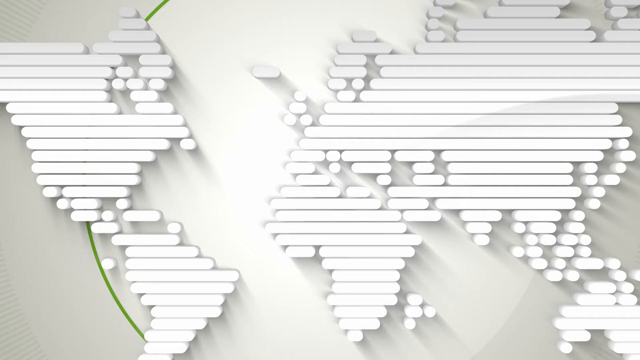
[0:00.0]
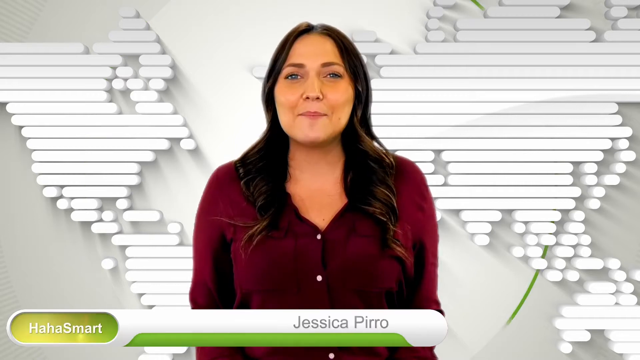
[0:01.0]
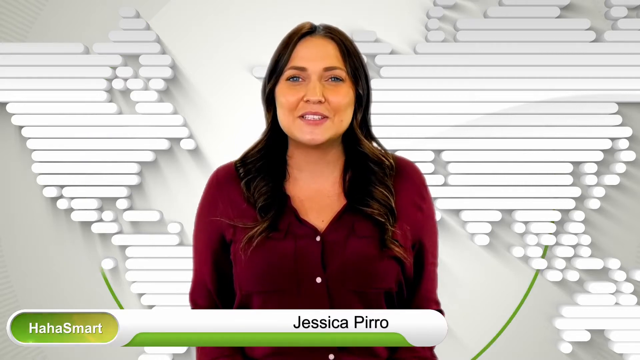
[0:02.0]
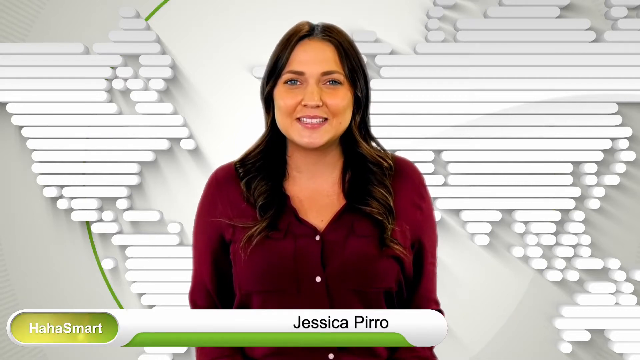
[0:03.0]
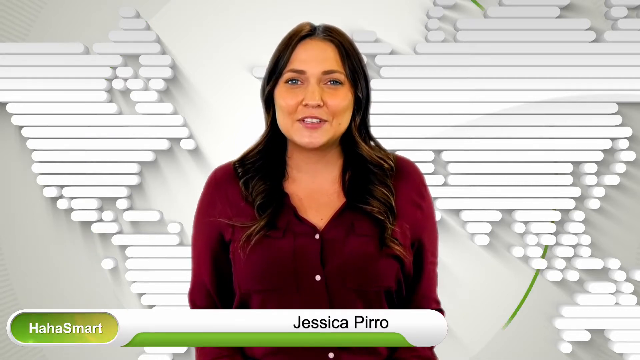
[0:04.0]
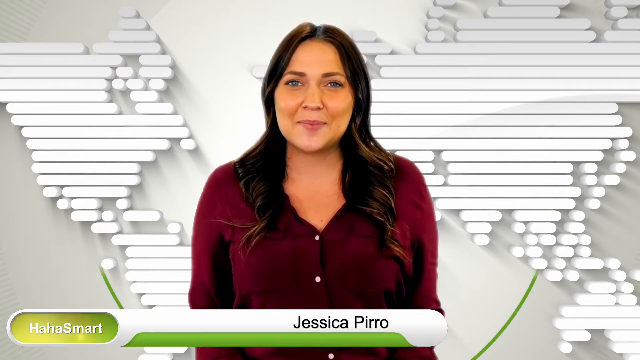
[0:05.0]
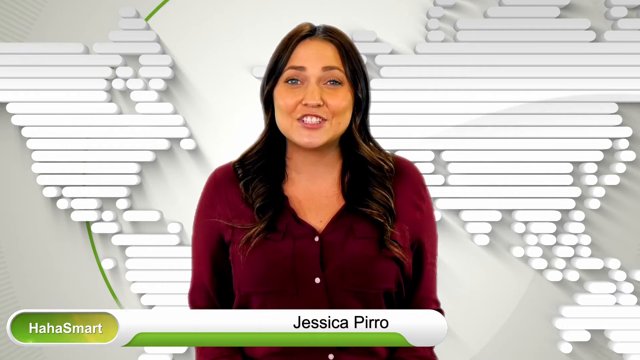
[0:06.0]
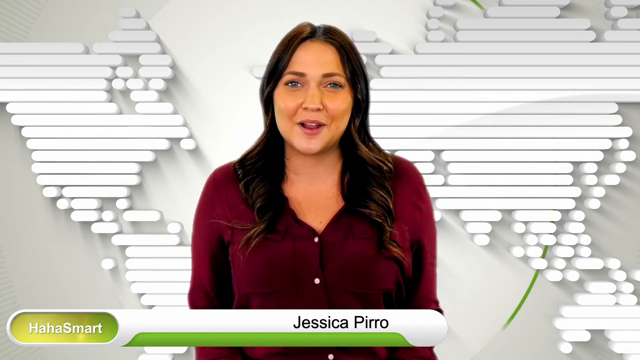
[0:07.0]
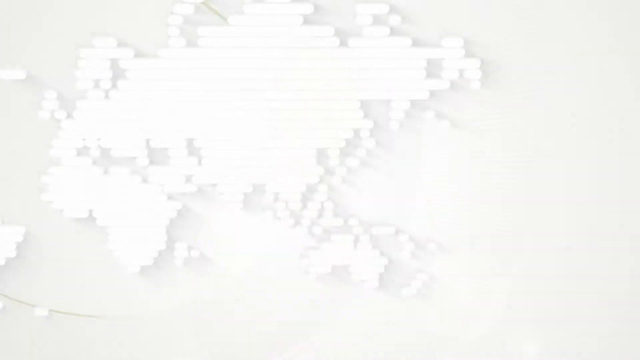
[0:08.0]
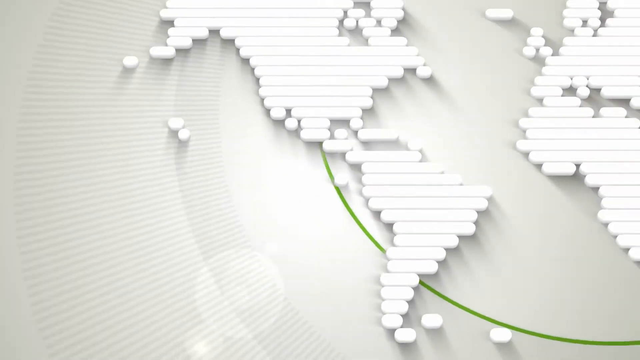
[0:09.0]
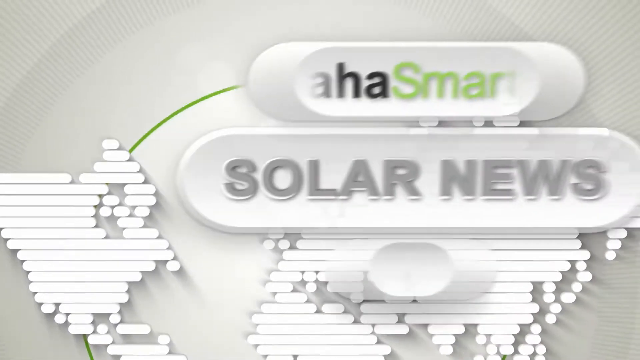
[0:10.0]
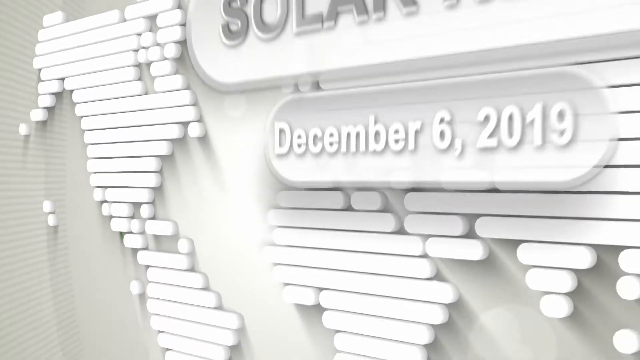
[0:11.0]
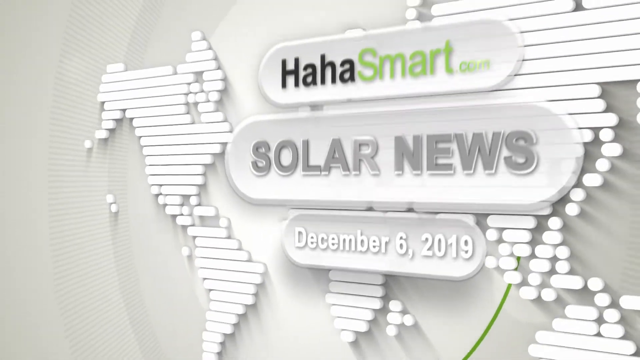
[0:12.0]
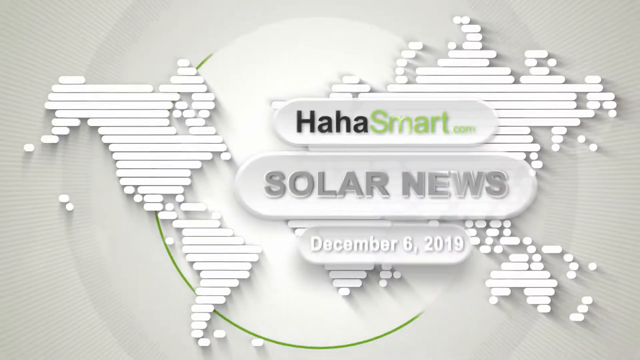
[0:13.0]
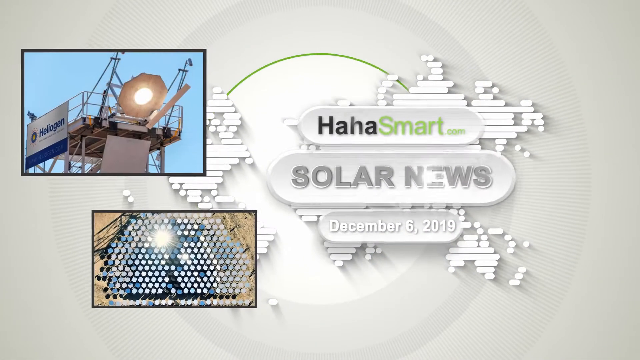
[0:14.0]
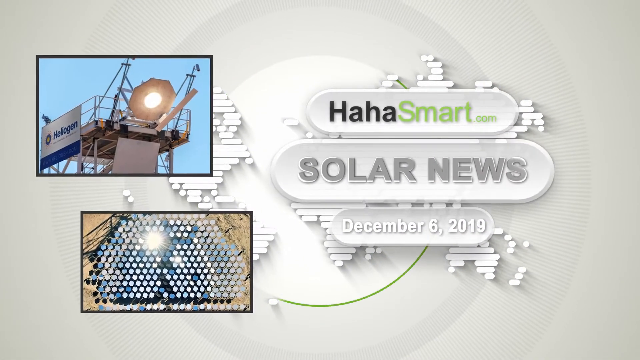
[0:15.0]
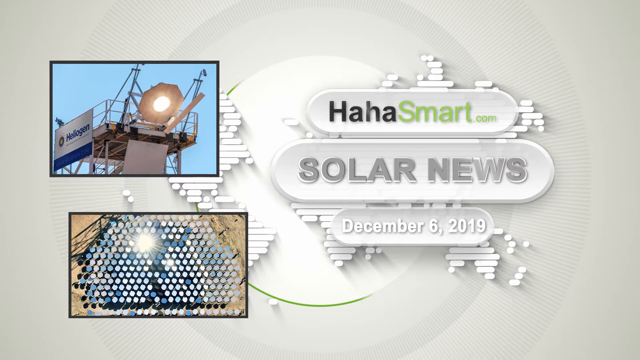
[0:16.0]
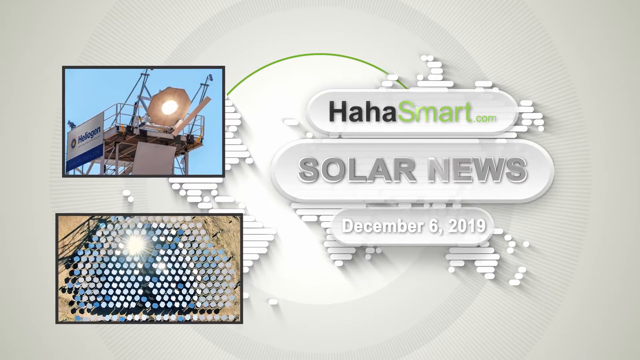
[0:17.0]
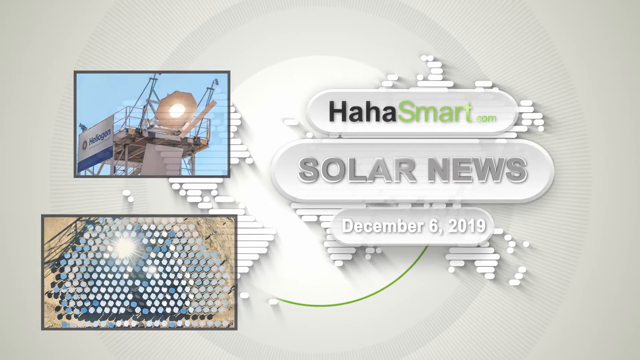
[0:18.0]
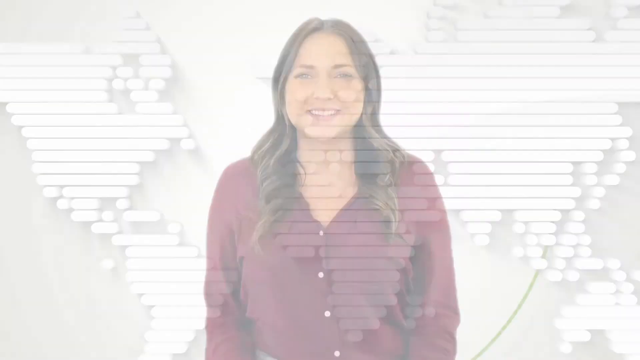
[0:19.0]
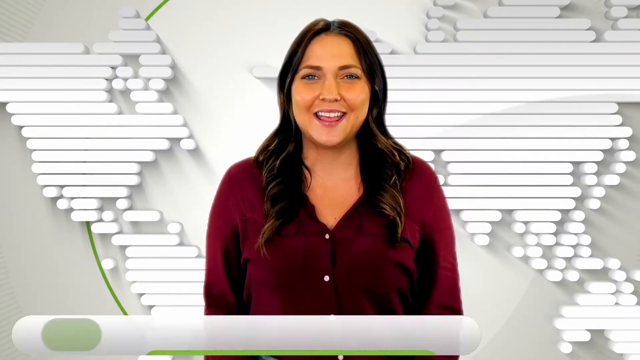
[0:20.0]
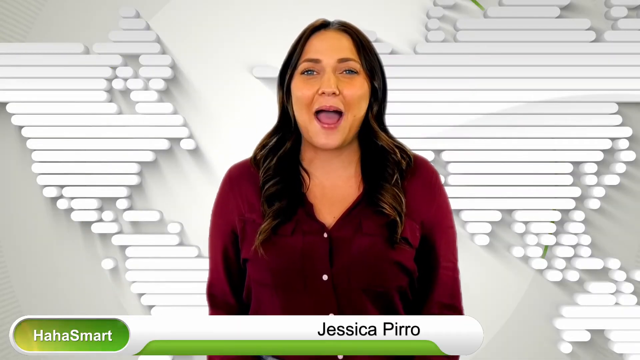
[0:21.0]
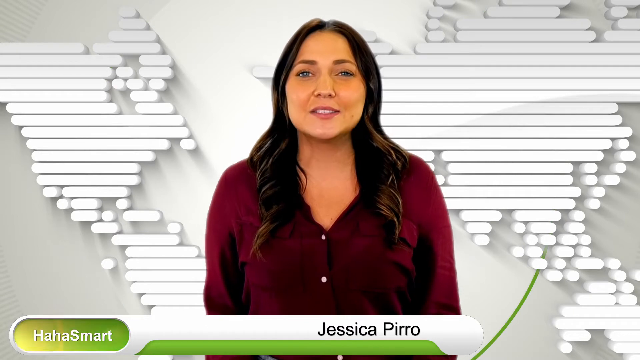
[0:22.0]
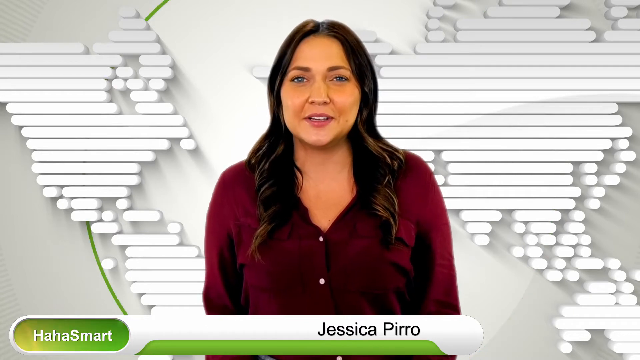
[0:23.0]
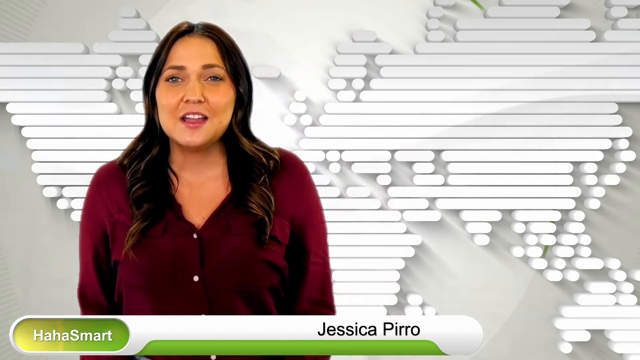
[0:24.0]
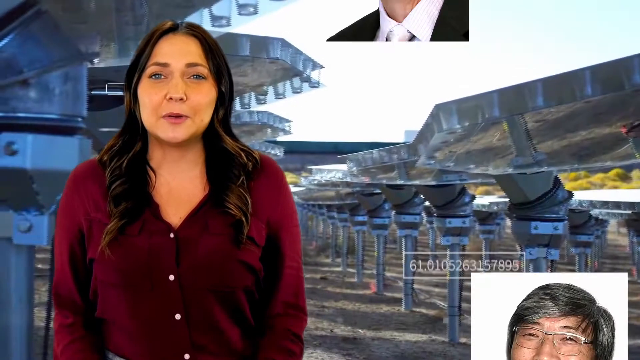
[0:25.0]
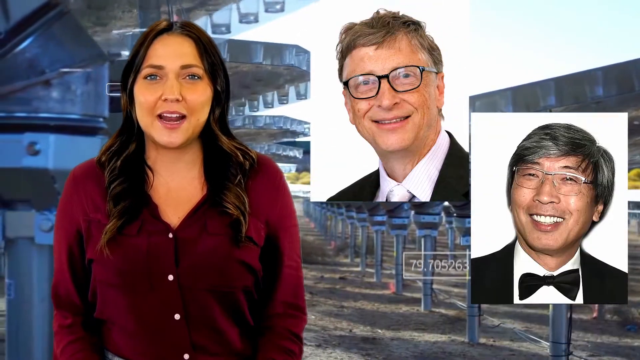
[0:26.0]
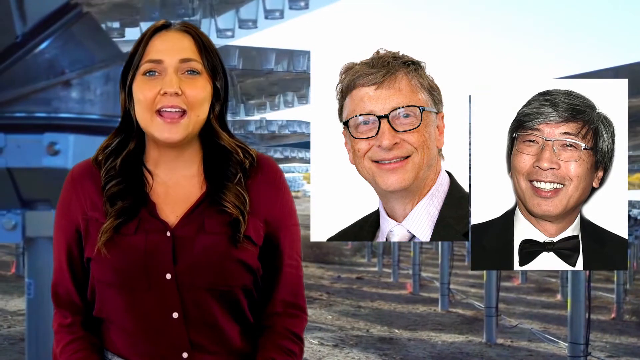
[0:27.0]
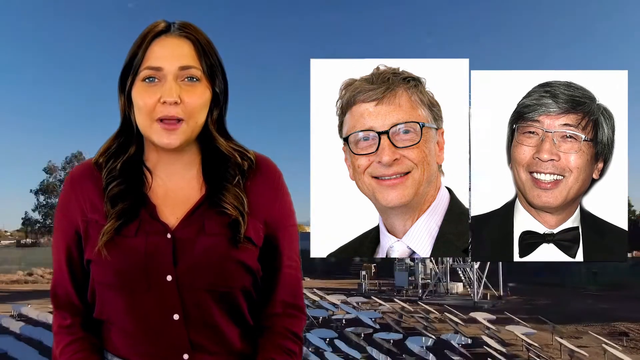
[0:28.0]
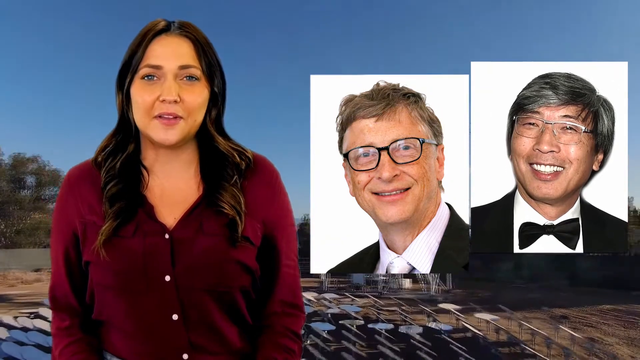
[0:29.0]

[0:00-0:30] The video is presented as Ha Ha Smart Solar News, dated December 6, 2019, with host Jessica Pirro (P-I-R-R-O), on the technological side of the arts. Two familiar faces are shown: William Gates III, known as Bill Gates, and one of his contemporaries from the Eastern side of things.